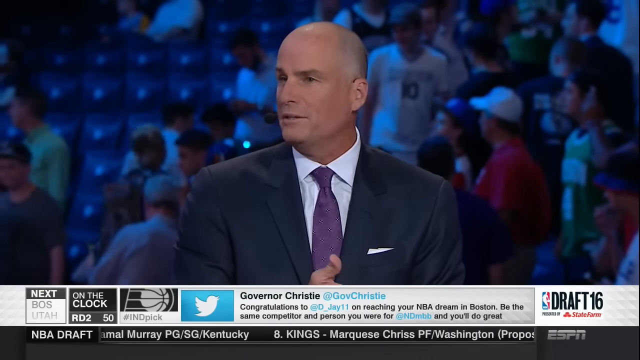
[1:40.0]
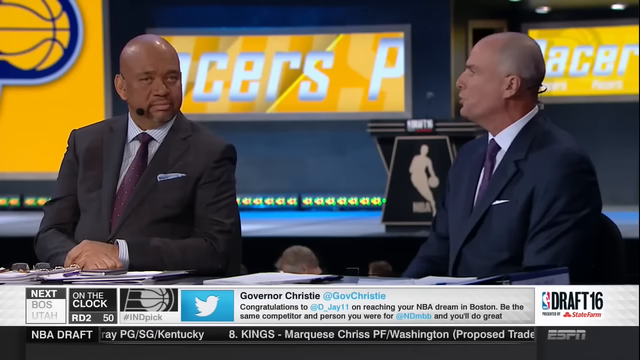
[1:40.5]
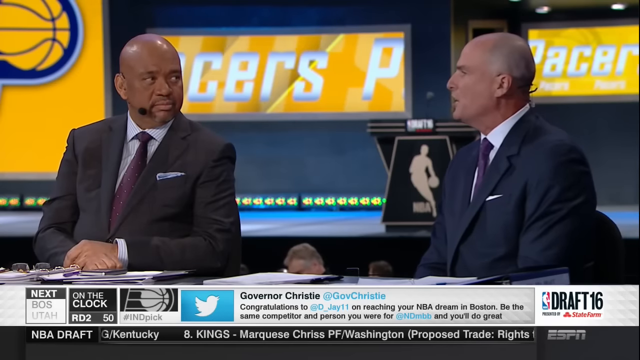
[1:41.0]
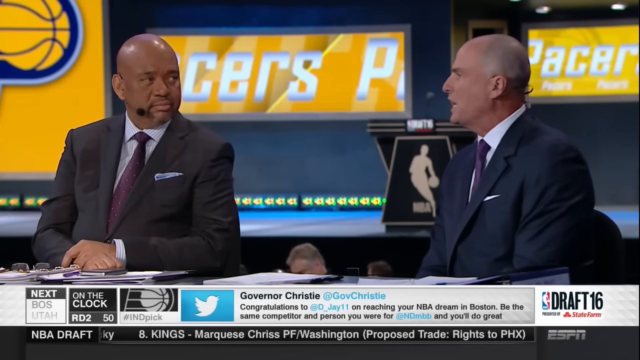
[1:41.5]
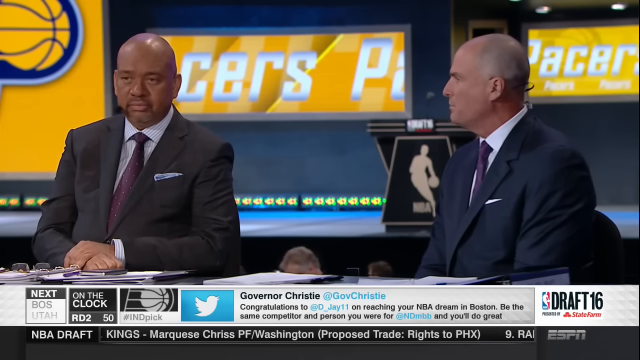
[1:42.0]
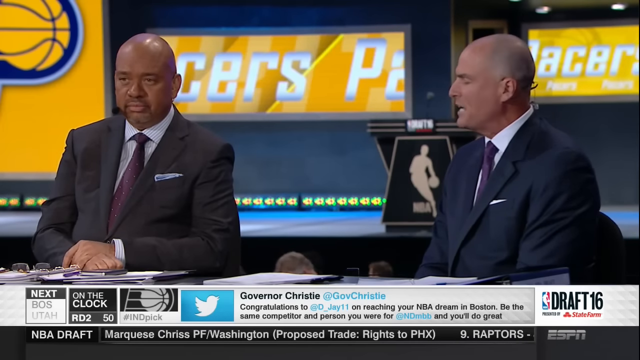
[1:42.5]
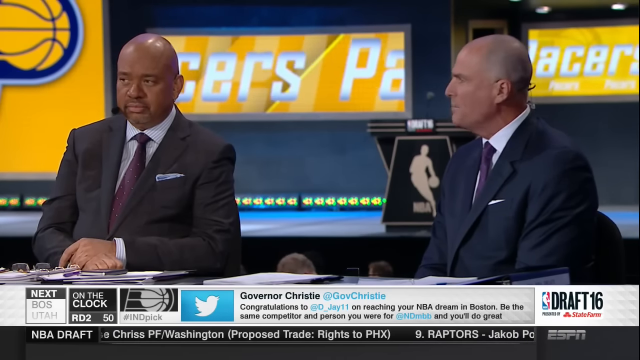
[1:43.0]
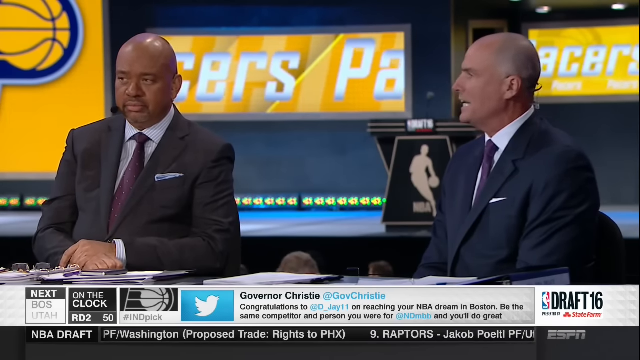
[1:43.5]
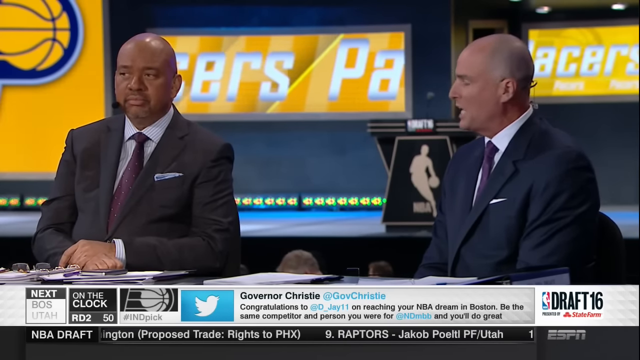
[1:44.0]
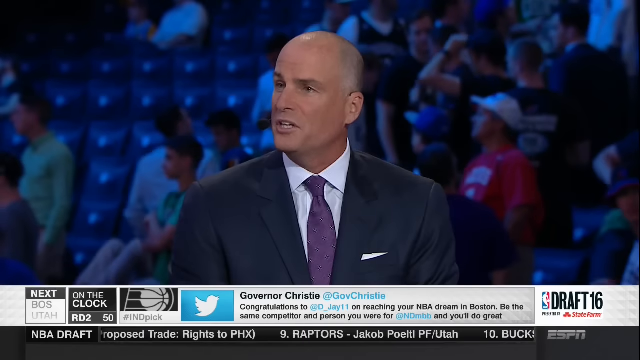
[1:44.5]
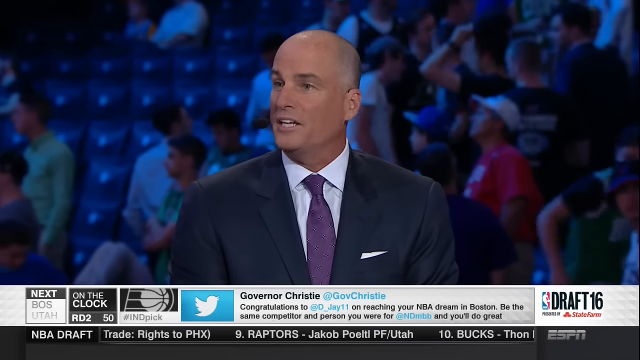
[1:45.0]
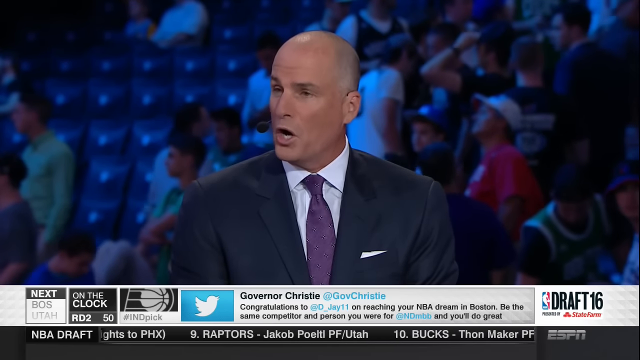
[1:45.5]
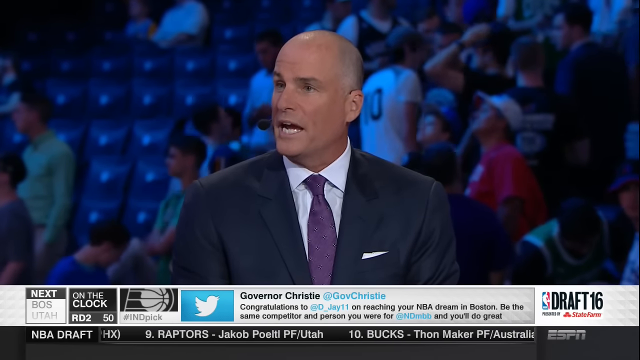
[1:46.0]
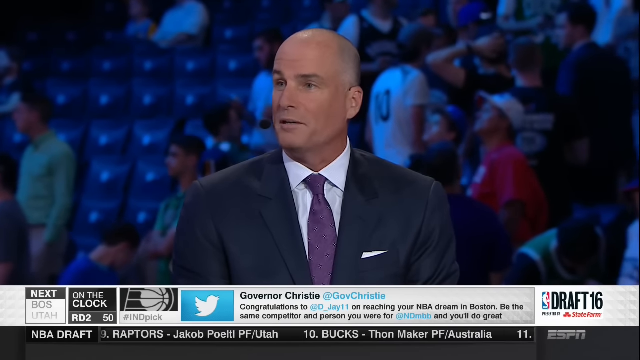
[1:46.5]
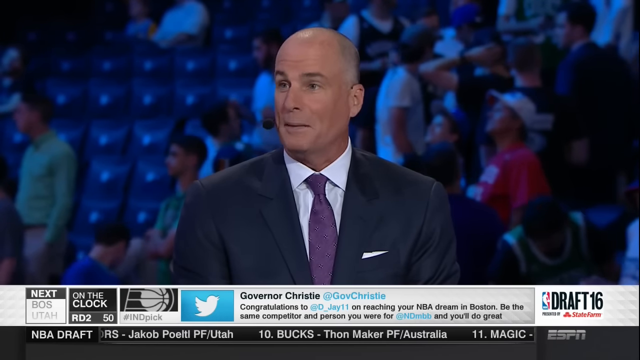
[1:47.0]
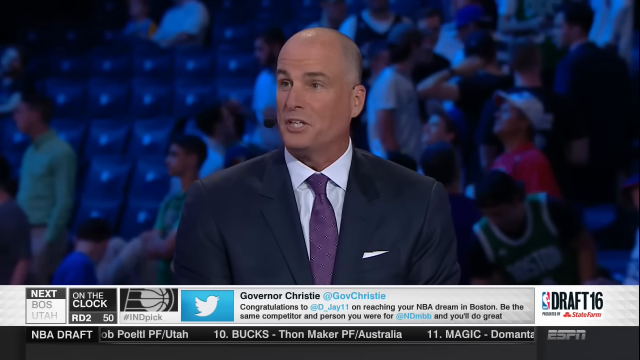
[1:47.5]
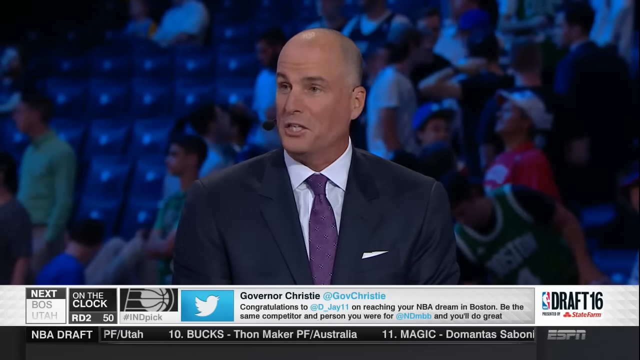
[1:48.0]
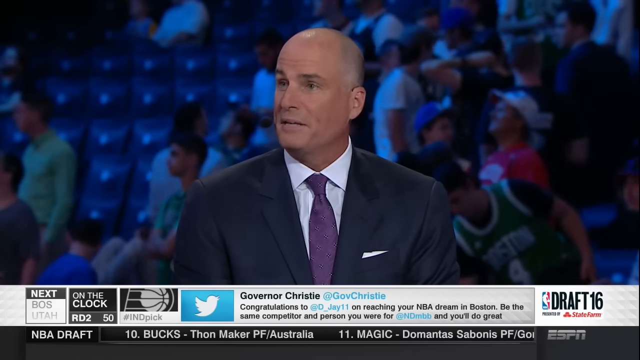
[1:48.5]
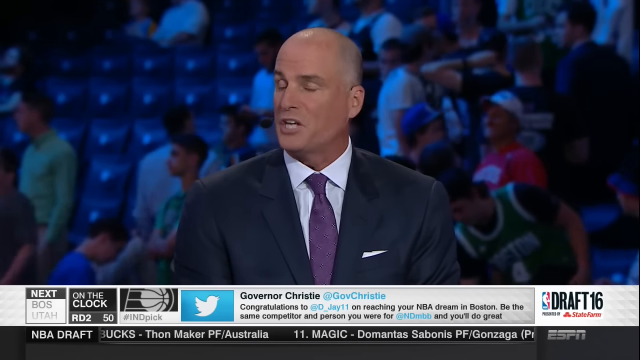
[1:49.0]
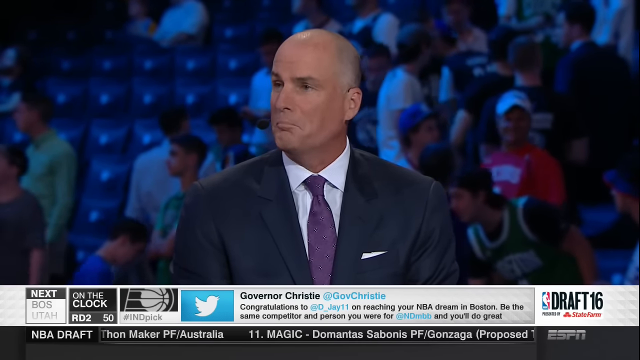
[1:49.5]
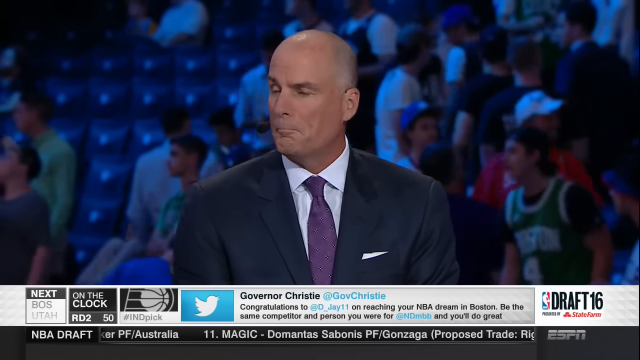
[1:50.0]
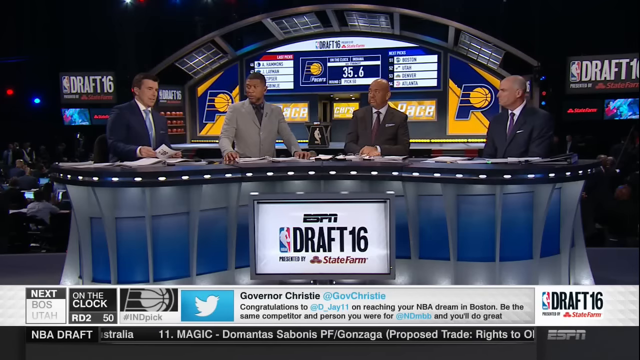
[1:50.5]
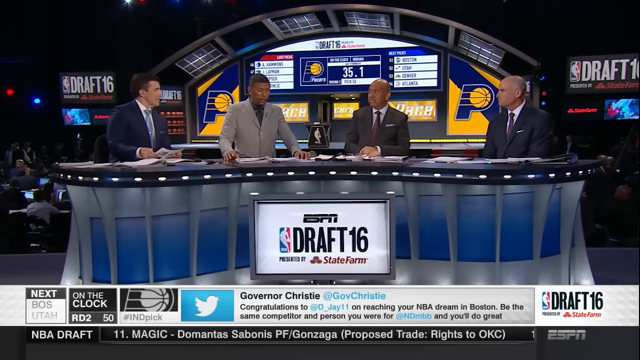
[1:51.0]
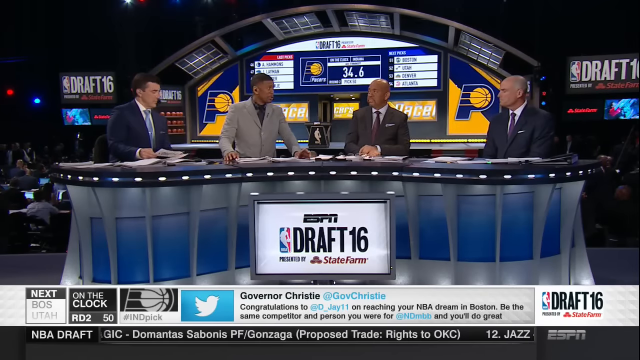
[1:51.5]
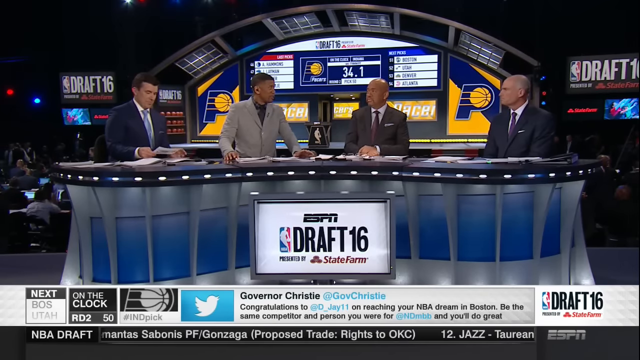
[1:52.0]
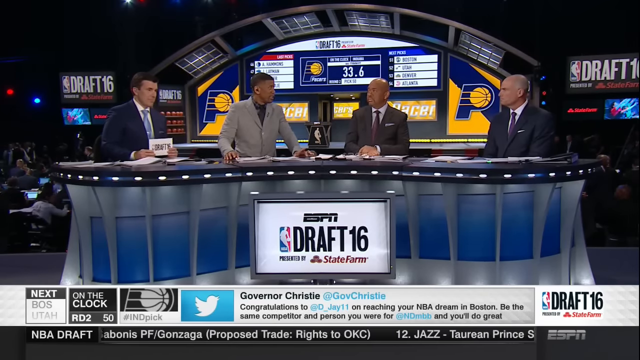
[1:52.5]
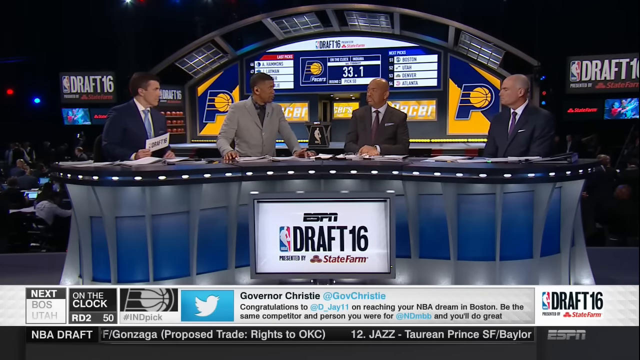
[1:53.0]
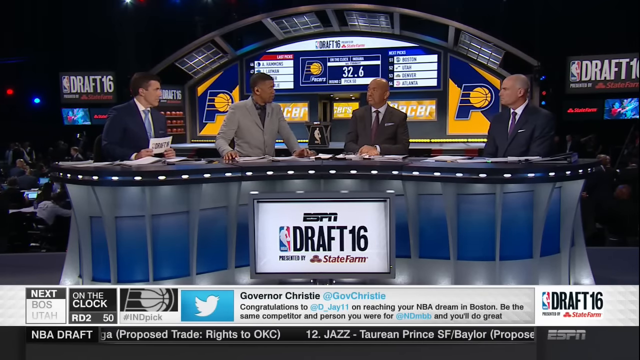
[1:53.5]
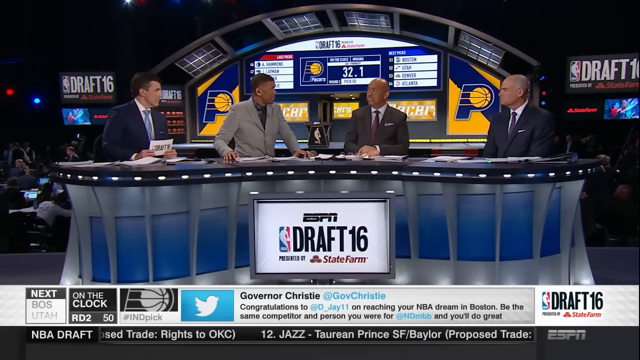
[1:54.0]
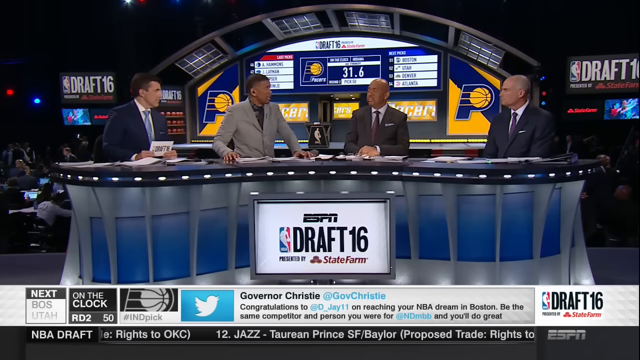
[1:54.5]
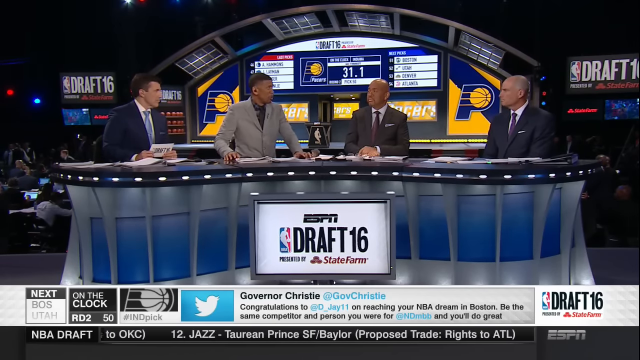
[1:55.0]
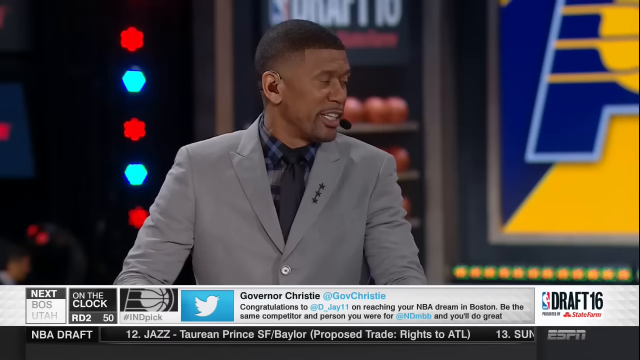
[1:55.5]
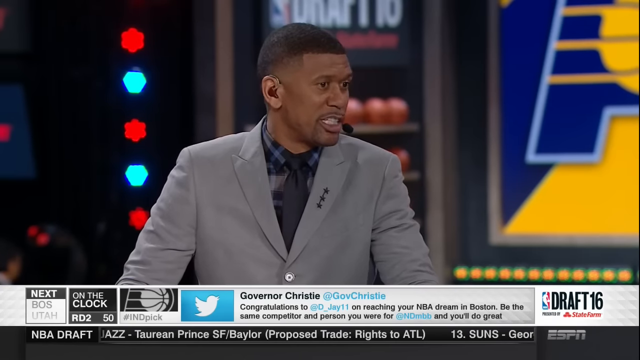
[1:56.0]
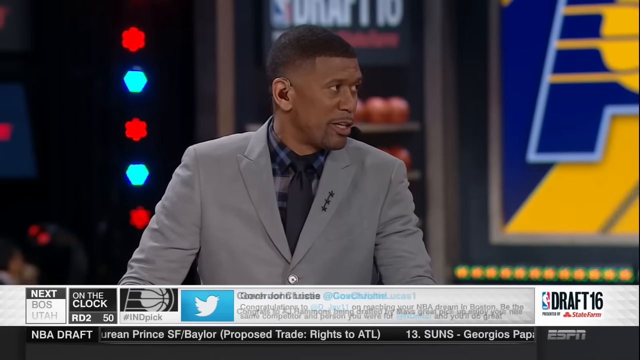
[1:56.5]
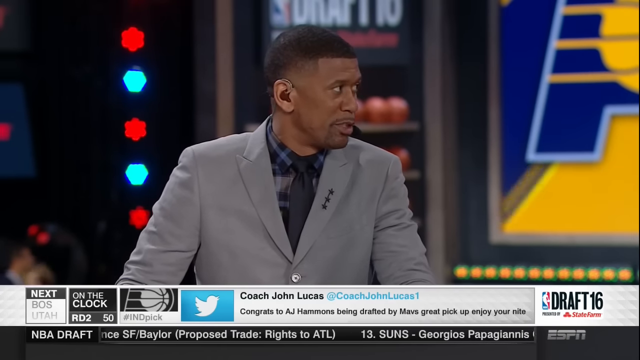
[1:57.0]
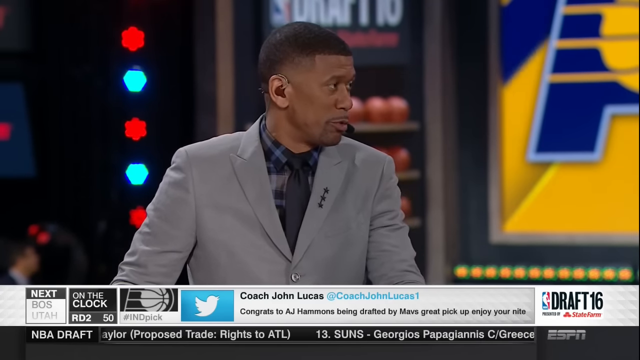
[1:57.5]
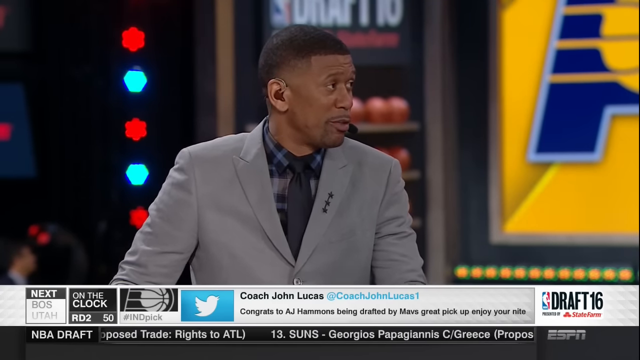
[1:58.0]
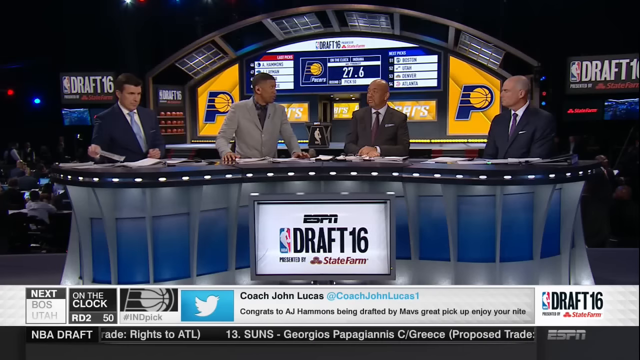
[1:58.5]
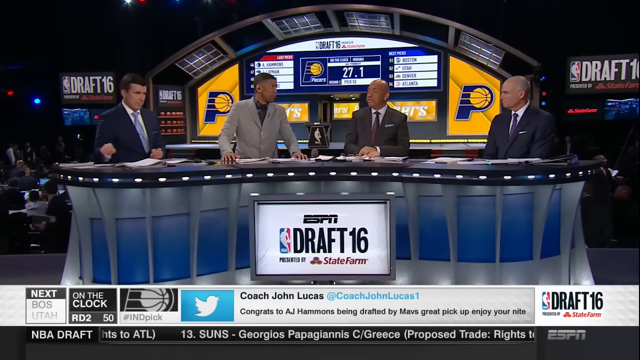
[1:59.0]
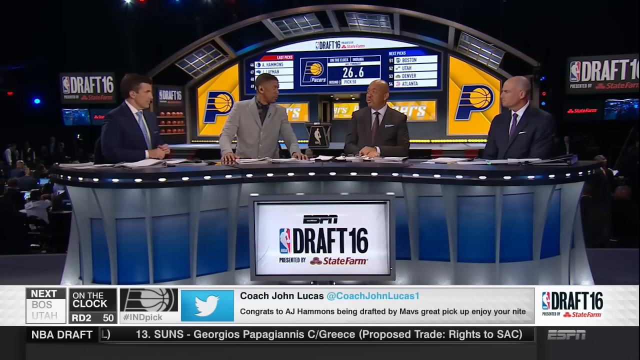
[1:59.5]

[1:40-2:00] At the bottom, a tweet from "Governor Christie", "@GovChristie", congratulates a player on reaching his NBA dream in Boston. Small, fast-moving text at the bottom lists "9 Raptors", "10 Bucks", "11 Magic", "12 Jazz" and "13 Suns", and cuts off at 14. The man speaking is the one at the far right of the podium from the viewer's side, in a blue suit. All of them have microphones that go around their mouths. Next to him is a bald man in a black suit. Next to that man is a man in a gray suit who starts talking after the man on the right, looking in his direction, so it seems like the two are having a conversation with someone between them.